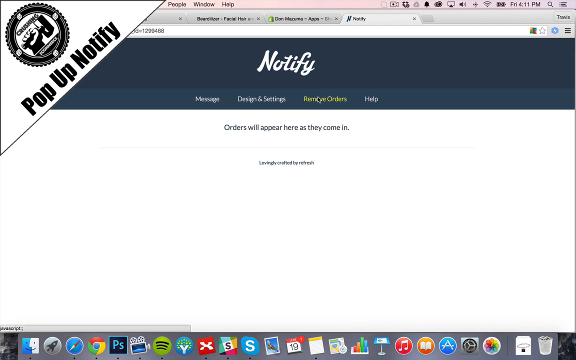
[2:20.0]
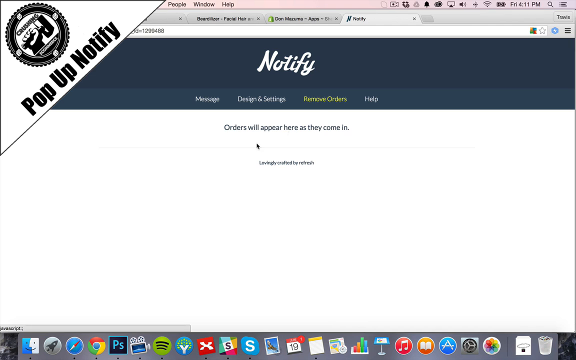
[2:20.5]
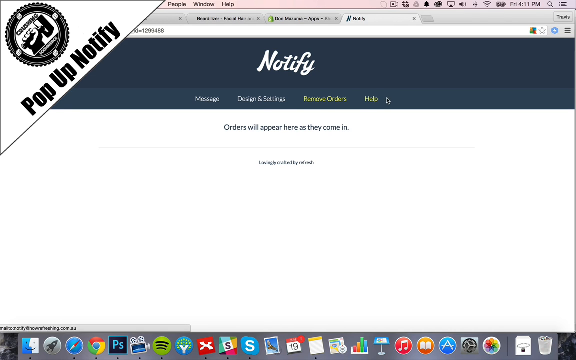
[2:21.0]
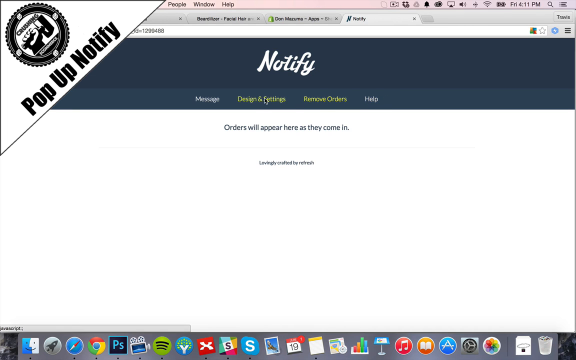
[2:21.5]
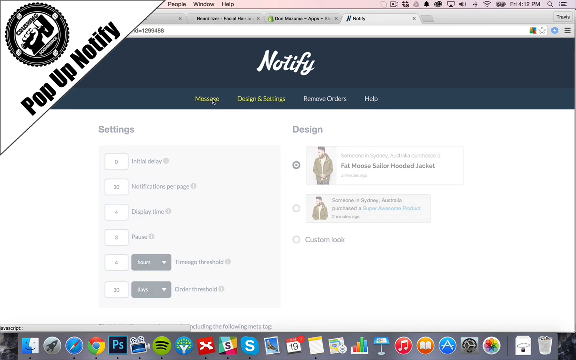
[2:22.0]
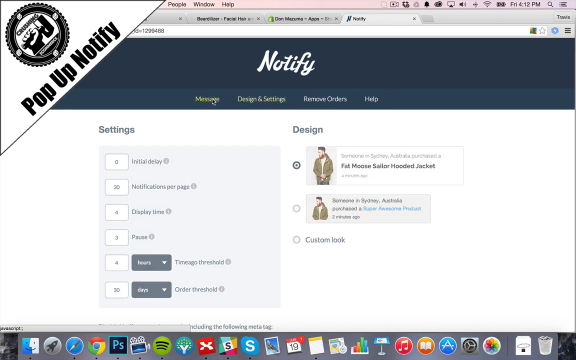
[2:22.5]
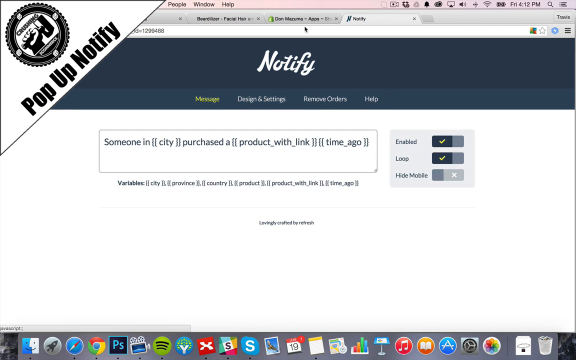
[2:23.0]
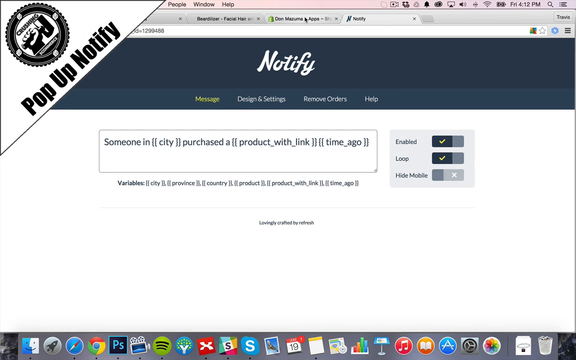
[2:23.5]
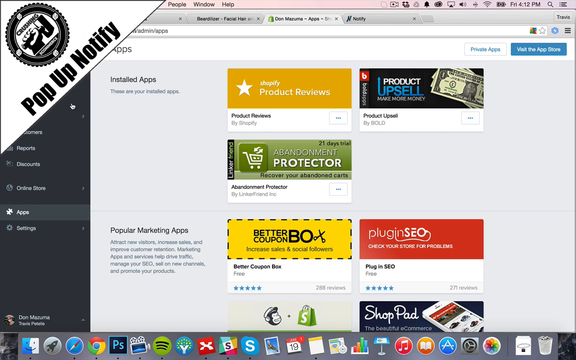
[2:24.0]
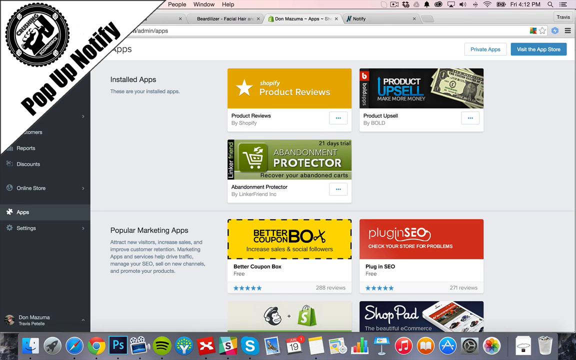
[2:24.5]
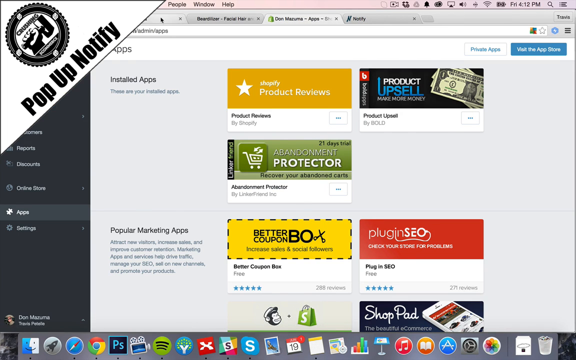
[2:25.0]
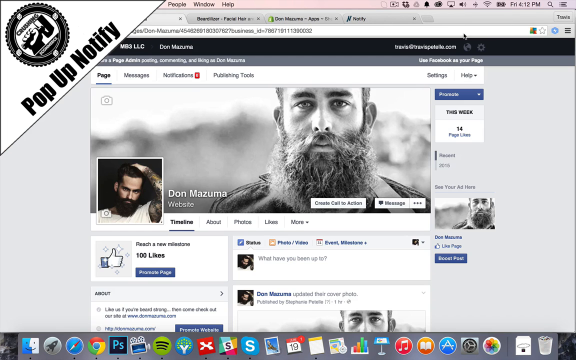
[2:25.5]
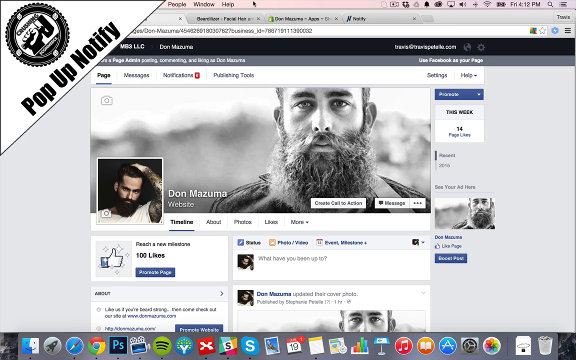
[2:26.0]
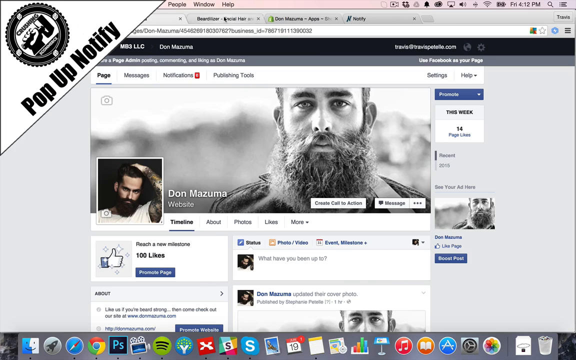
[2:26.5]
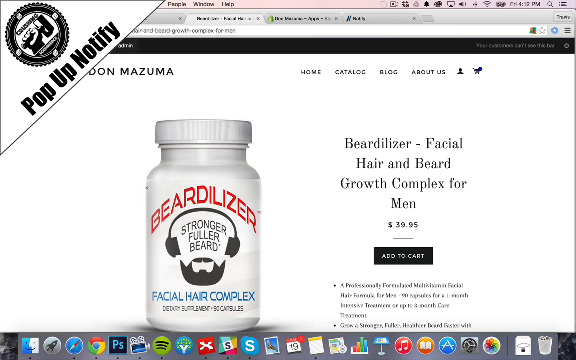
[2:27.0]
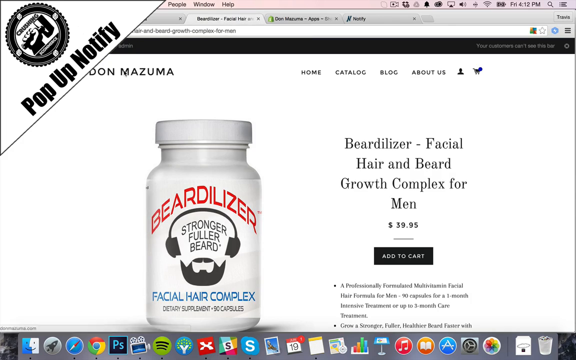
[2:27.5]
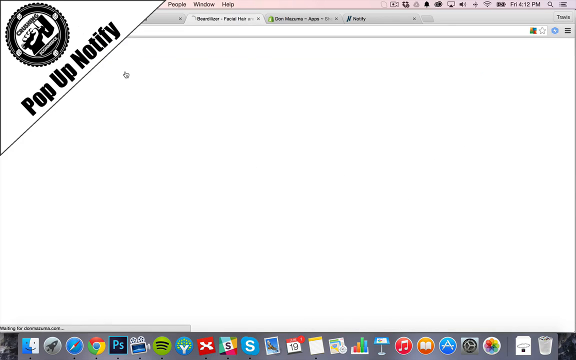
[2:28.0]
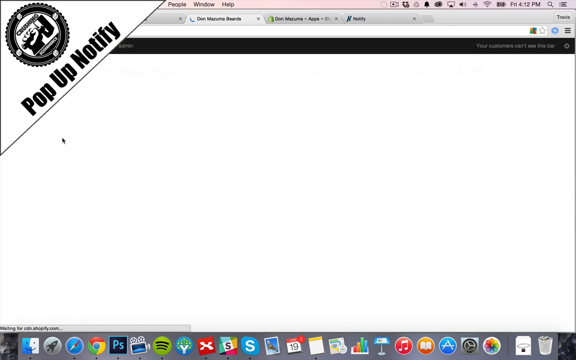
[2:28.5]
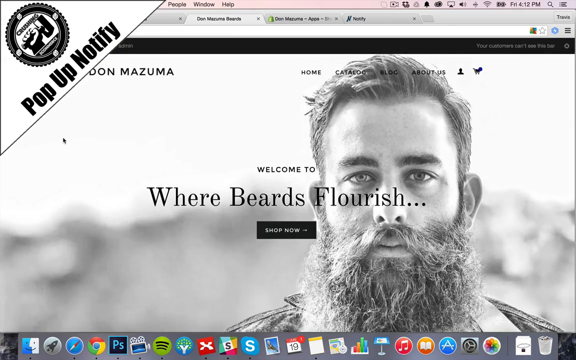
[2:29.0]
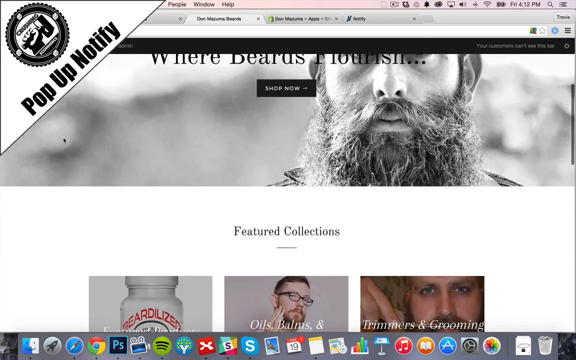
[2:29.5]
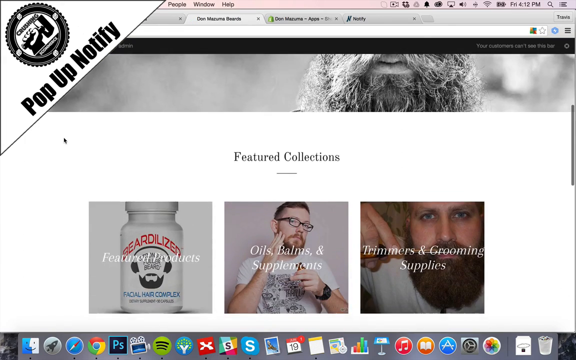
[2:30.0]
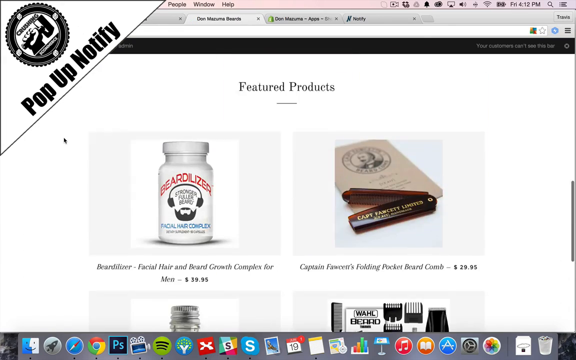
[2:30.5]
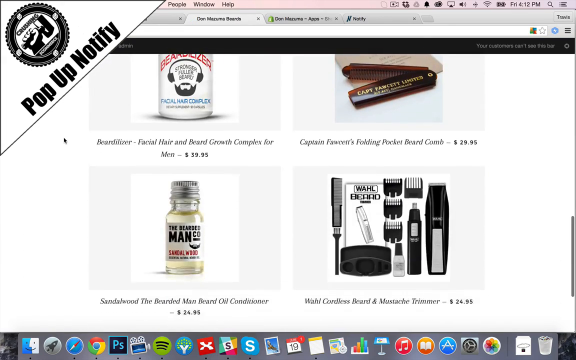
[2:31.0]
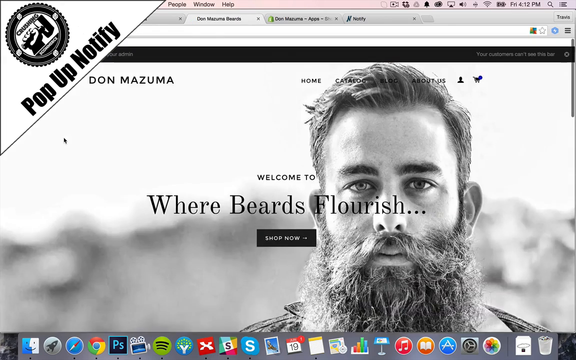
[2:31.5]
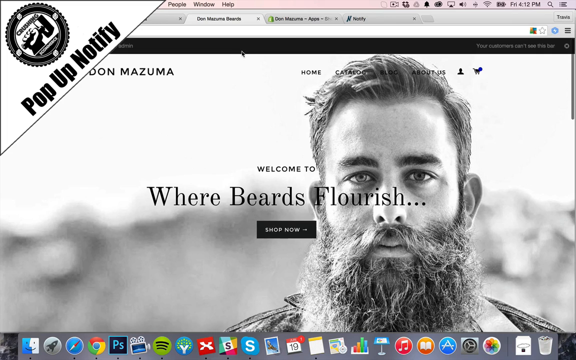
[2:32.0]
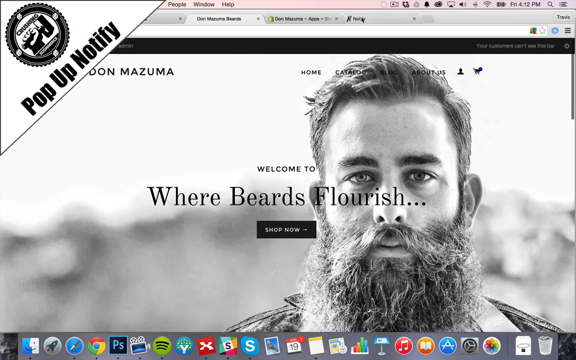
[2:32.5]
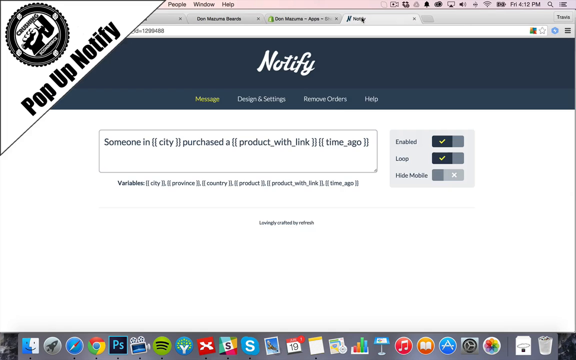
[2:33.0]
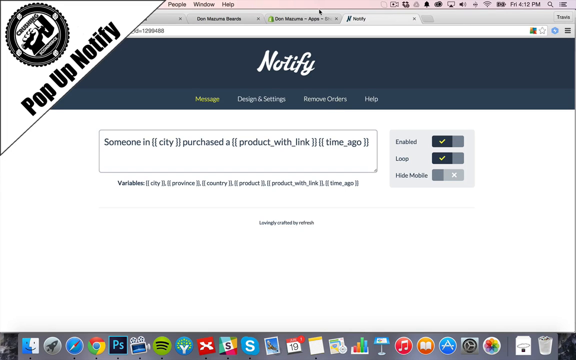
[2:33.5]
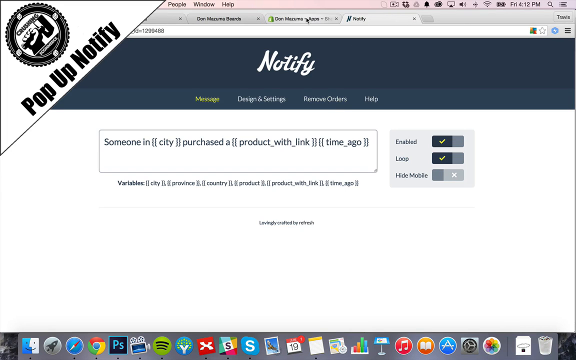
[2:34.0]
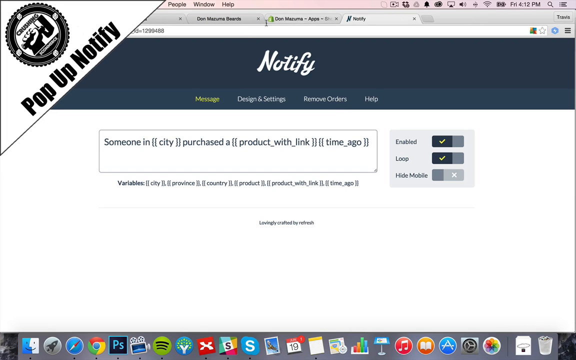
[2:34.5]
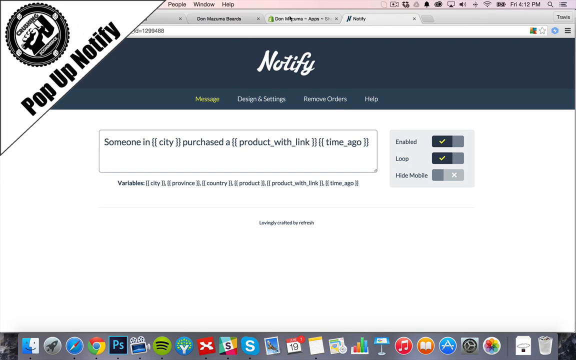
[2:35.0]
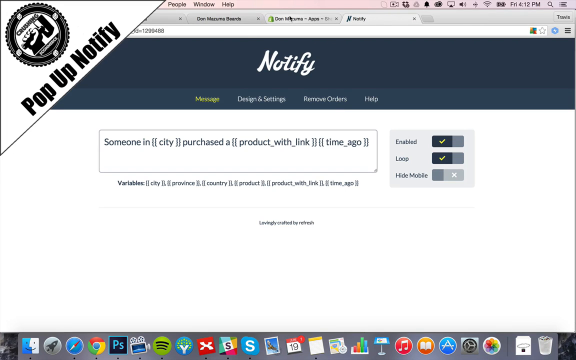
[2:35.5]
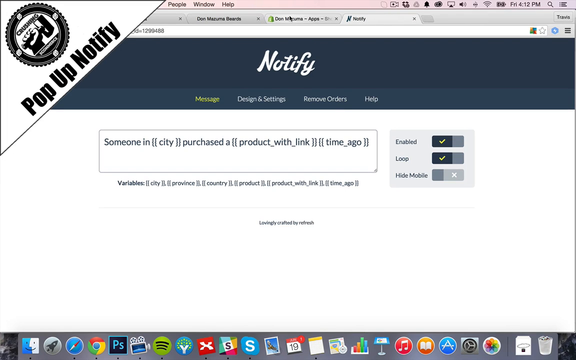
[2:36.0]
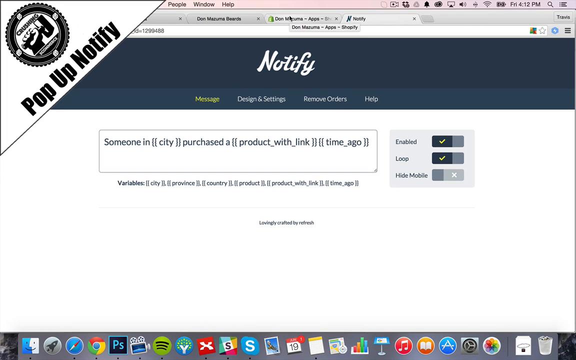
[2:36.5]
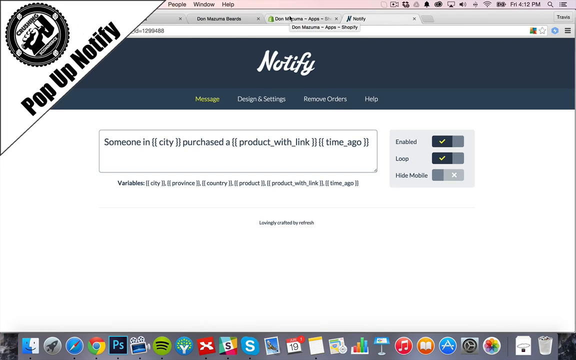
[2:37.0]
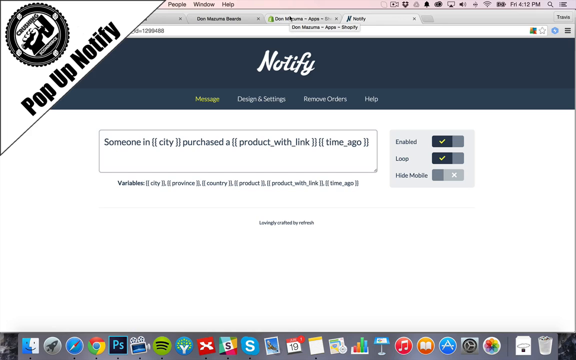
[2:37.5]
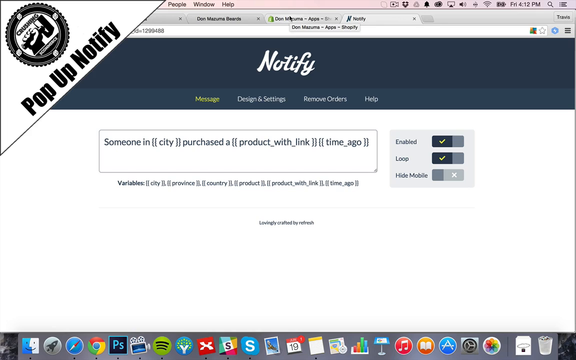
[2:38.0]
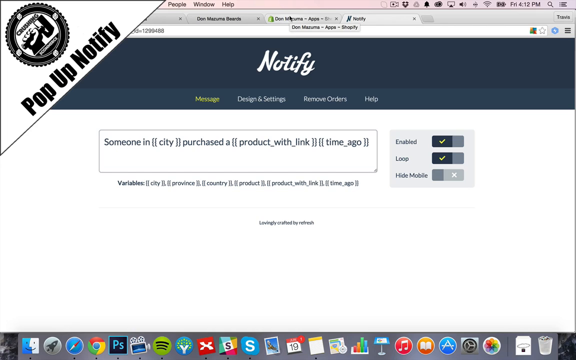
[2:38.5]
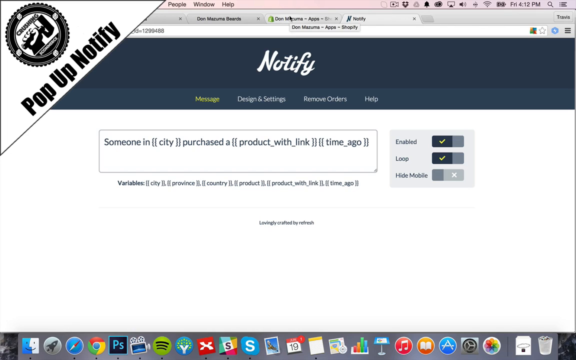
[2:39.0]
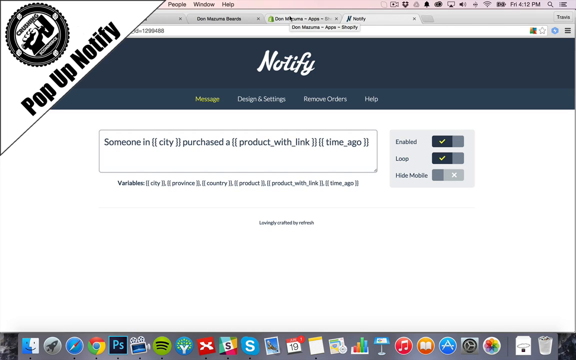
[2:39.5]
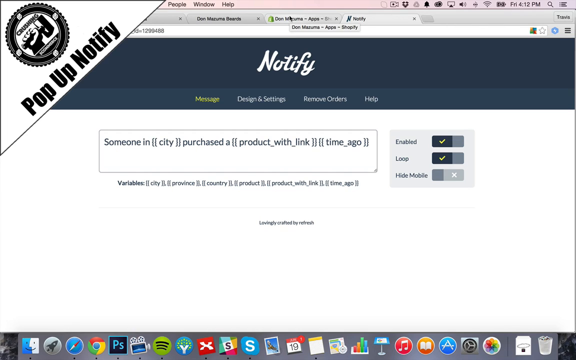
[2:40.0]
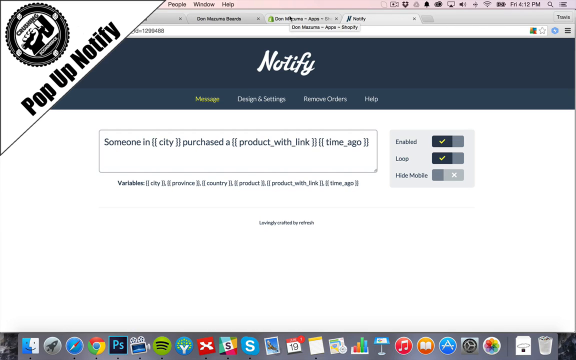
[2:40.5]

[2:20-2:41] "Notify" is still at the top, possibly in white on a bluish background, with tabs that apparently read "message", "designer settings", "remove orders" and "help". The person is in the remove orders section, which is highlighted green while the other tabs look white and black. This section reads "Orders will appear as they come in", and the mouse hovers over it. The view goes back to settings, then apparently back to Shopify, where the person clicks into another website, apparently the person's own, which has beard products specifically for men and the tagline "where beards flourish".